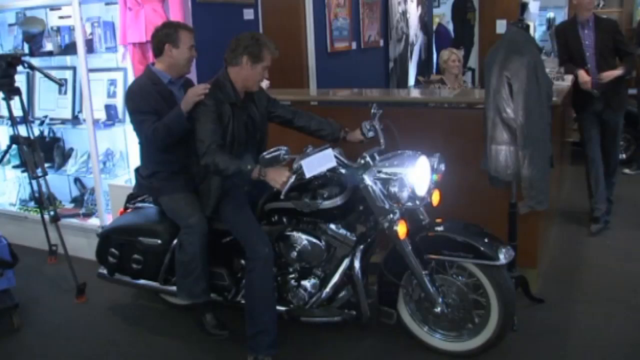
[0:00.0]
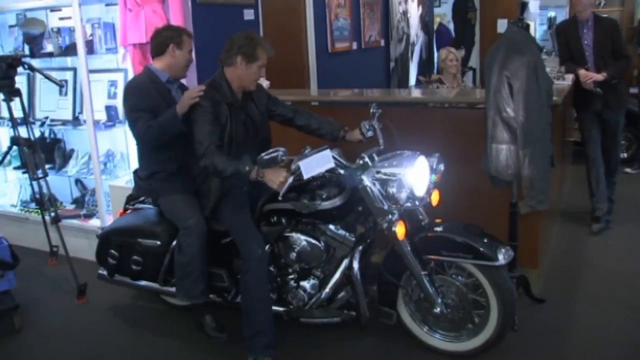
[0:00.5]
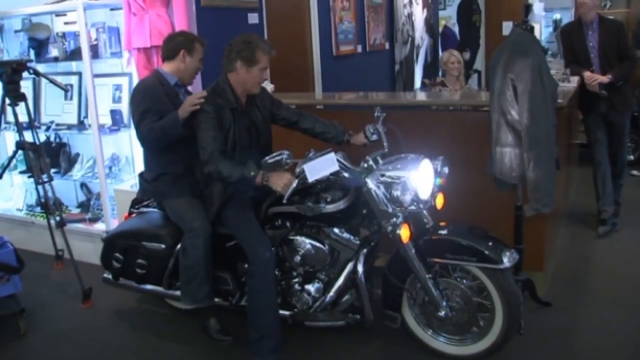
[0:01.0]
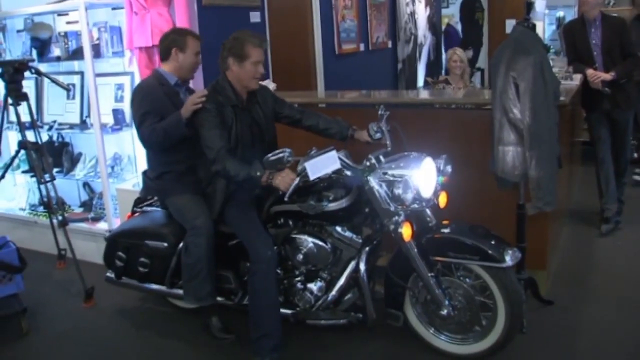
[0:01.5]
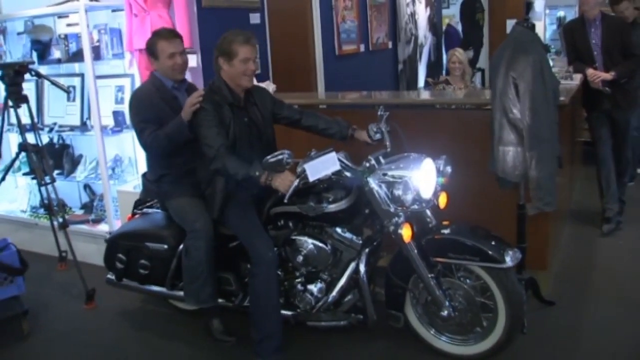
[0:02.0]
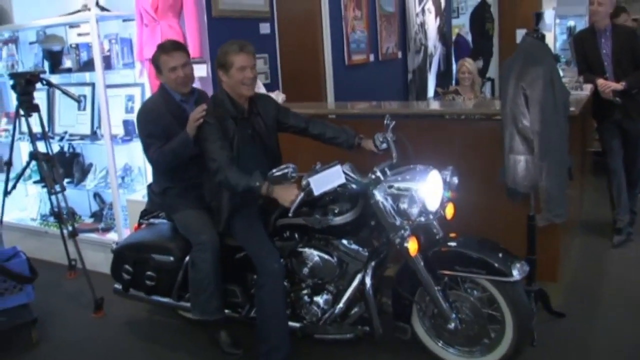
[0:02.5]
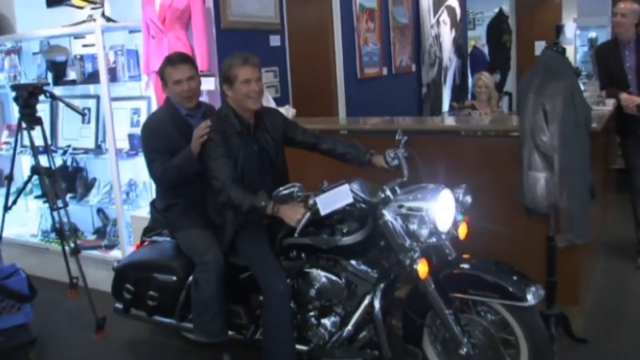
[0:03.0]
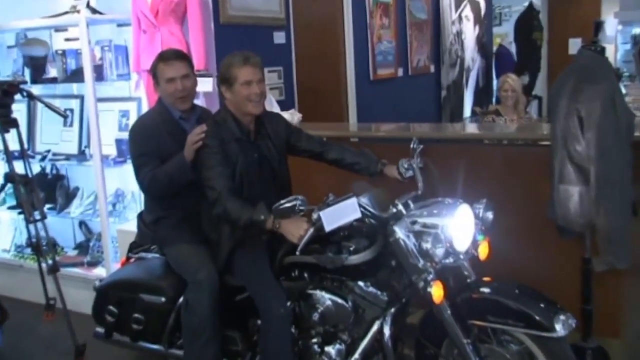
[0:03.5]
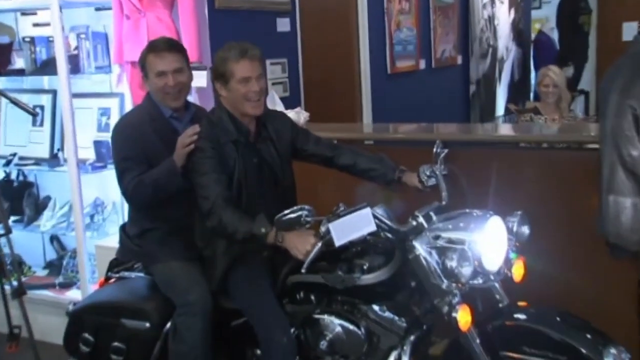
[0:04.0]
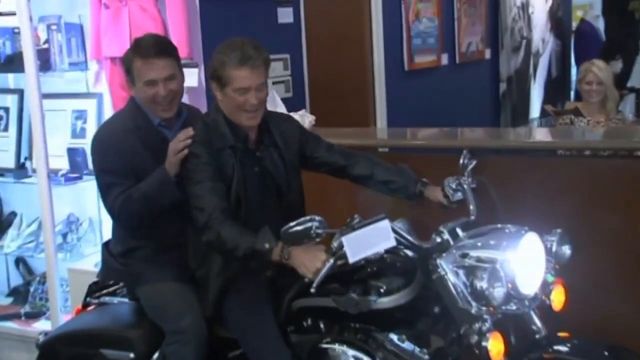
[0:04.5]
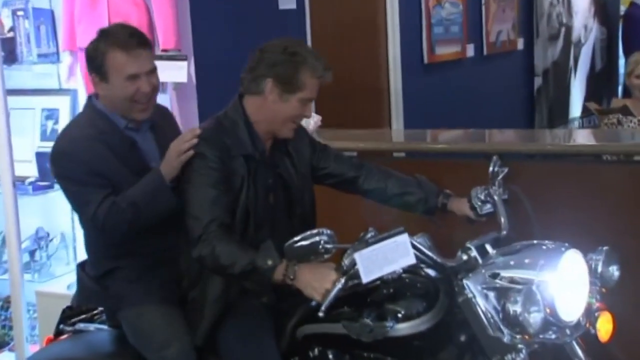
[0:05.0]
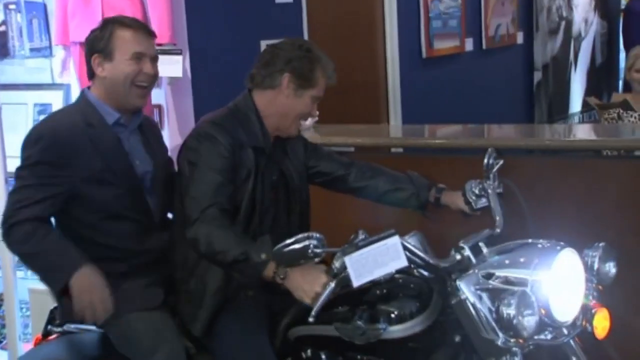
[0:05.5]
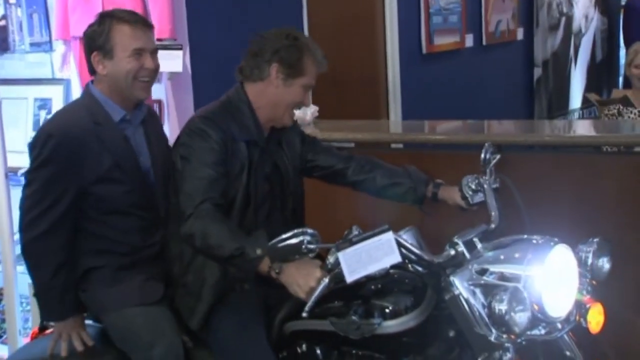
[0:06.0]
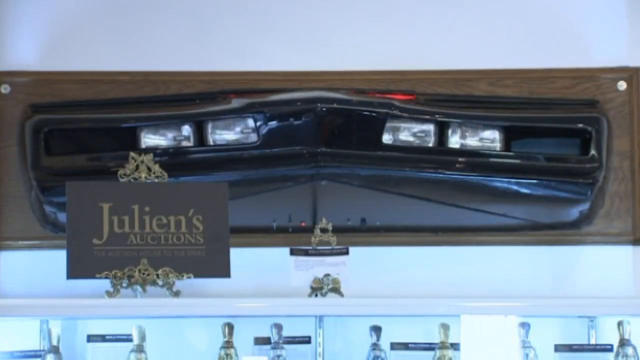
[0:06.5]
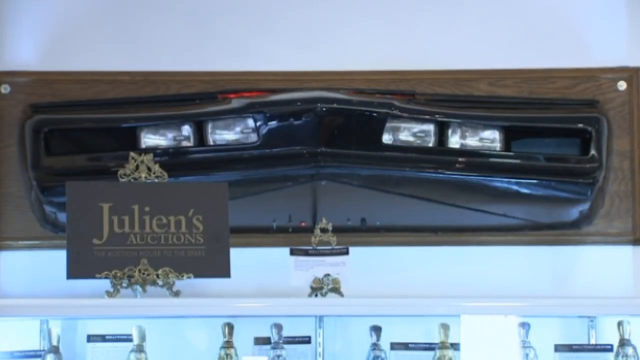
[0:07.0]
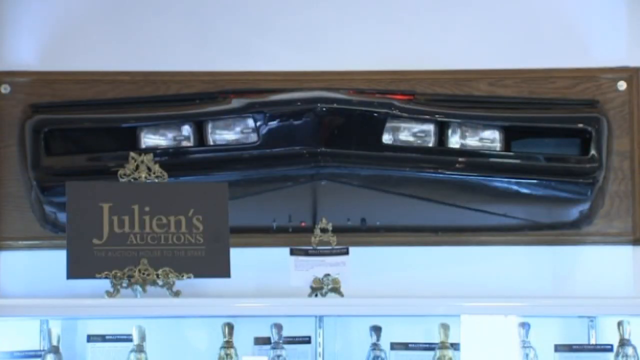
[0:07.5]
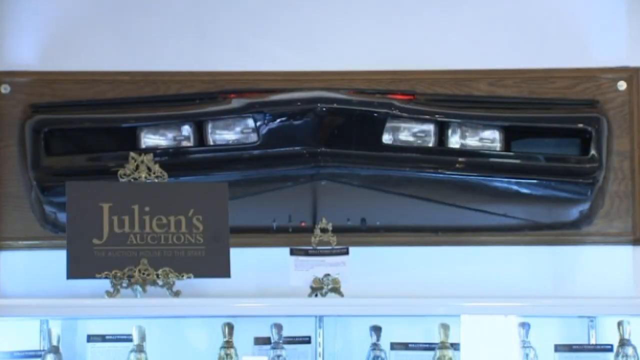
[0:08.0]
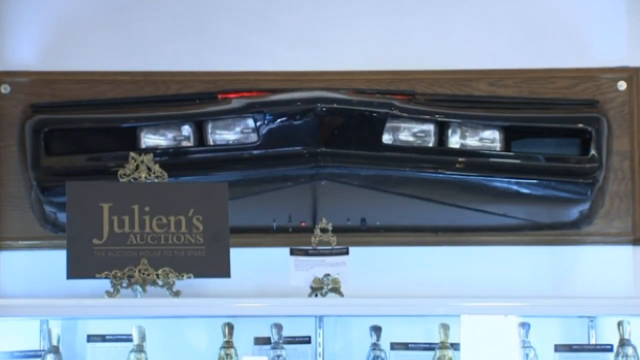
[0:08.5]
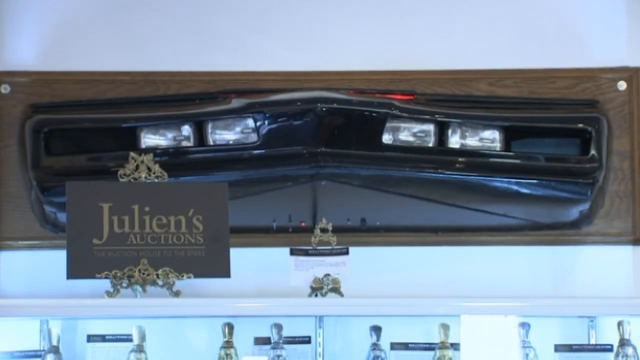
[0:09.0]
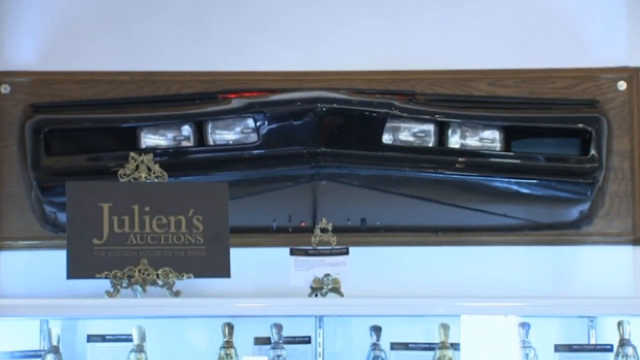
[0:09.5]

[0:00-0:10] Two men sit on what appears to be a Harley-Davidson motorcycle, indoors, in what looks like some type of news photo shoot. On the left side of the screen is an illuminated trophy case with awards; there appears to be a tripod with a camera in front of it, and the case appears to be lit with some type of artificial lighting. The motorcycle faces the right of the frame. The man at the handlebars wears something like a three-quarter-length leather jacket and apparently black pants, possibly high-quality black denim, and he looks down to his left. The man riding behind him holds the driver's right shoulder; he wears a dark navy suit jacket with no tie, a light blue or grayish-blue dress shirt, and dark blue or possibly off-gray denim pants. The motorcycle appears to be on, and the headlight is fully lit. At the far right of the screen another man stands leaning on a high office reception desk, behind which a blonde woman sits; only her head and parts of her shoulders are visible. The people on the motorcycle look at the camera. The person on the motorcycle looks like an actor, possibly David Hasselhoff. The video cuts to what looks like a business card in the lower left-hand corner of the screen reading "Julian's Auctions," with something that looks like police lights on screen.